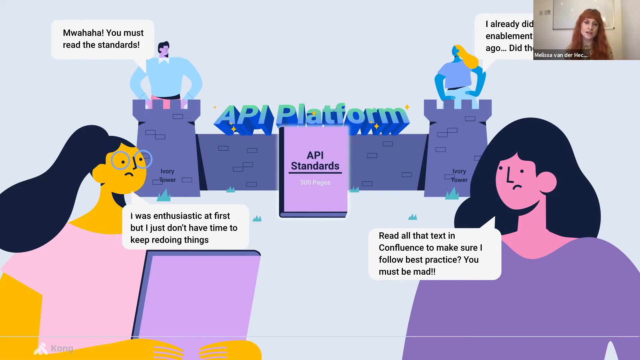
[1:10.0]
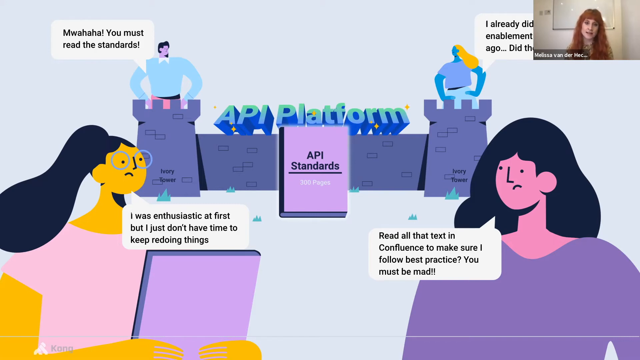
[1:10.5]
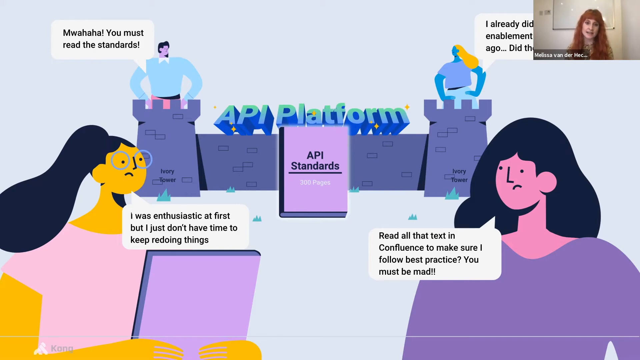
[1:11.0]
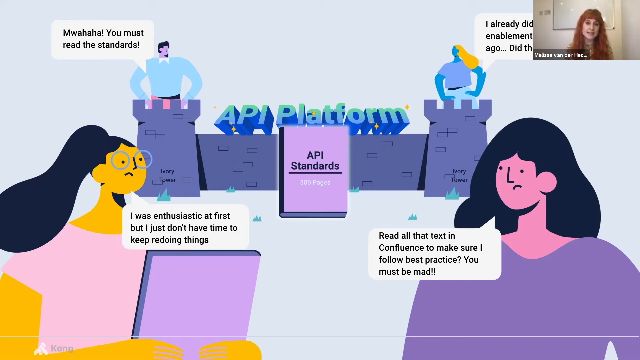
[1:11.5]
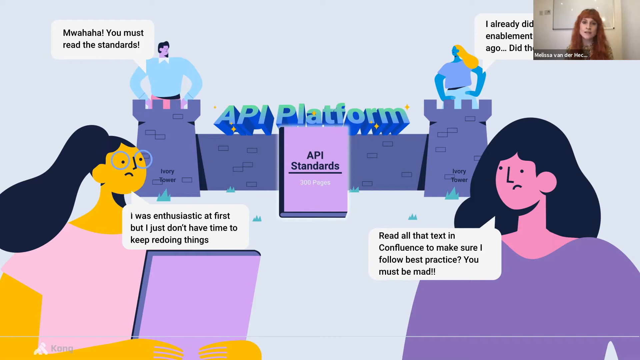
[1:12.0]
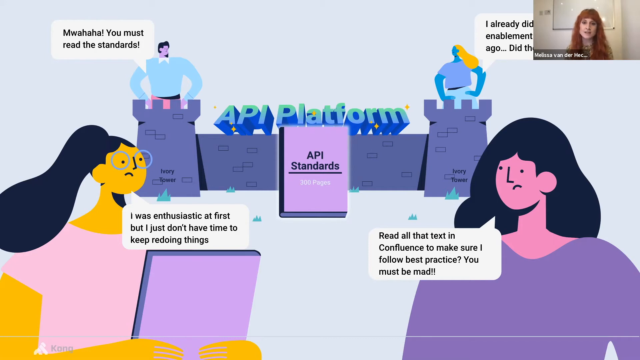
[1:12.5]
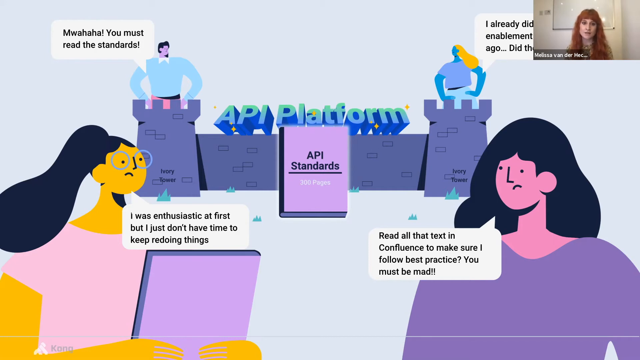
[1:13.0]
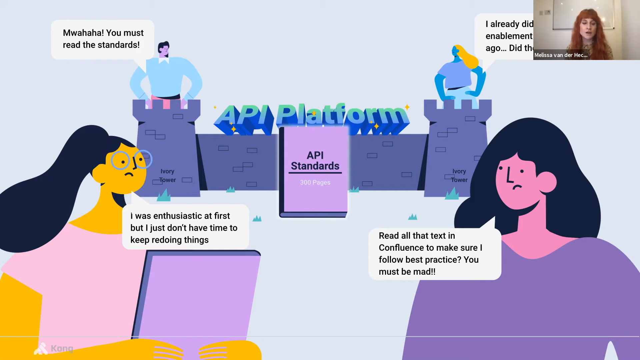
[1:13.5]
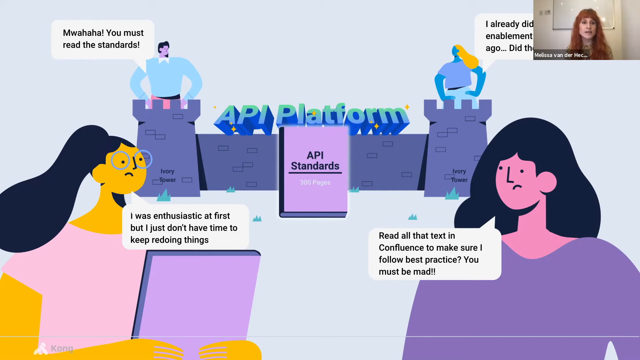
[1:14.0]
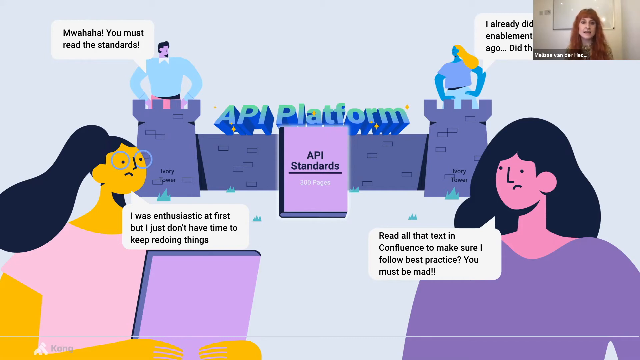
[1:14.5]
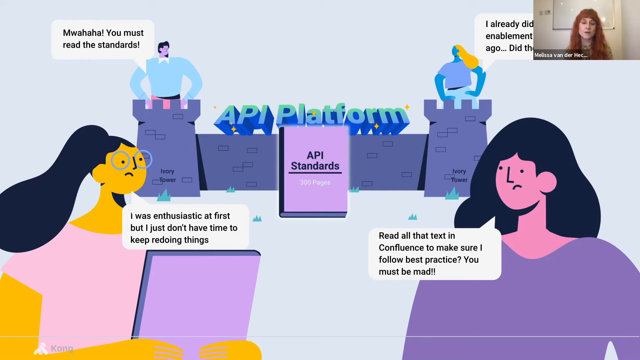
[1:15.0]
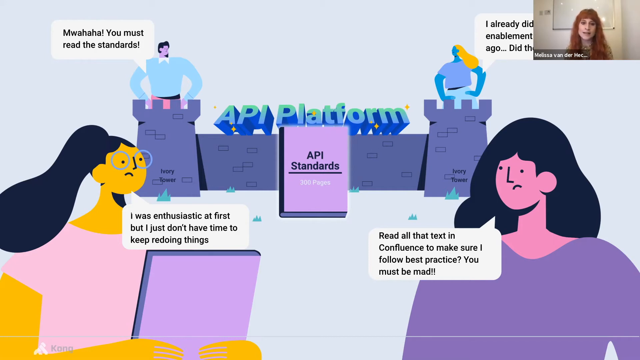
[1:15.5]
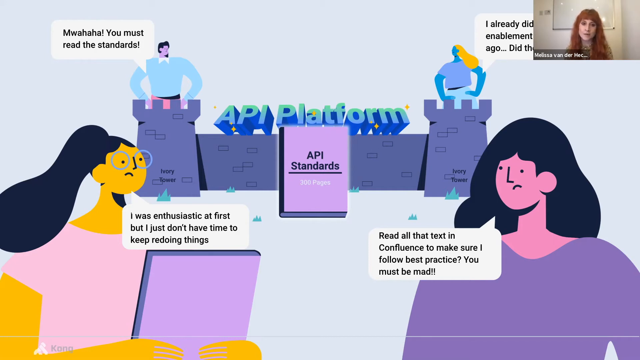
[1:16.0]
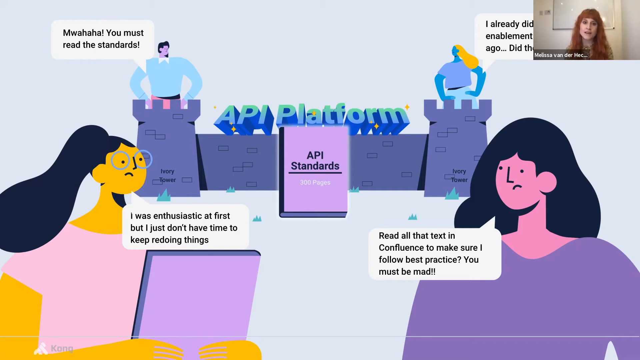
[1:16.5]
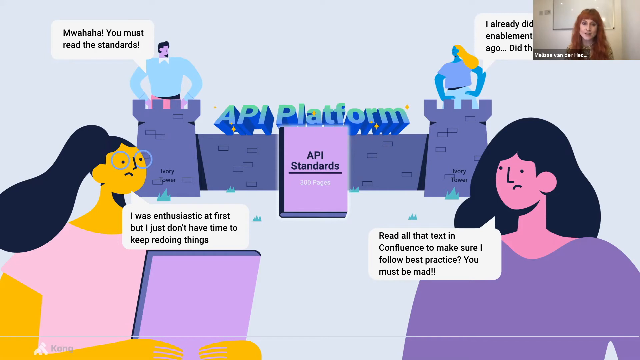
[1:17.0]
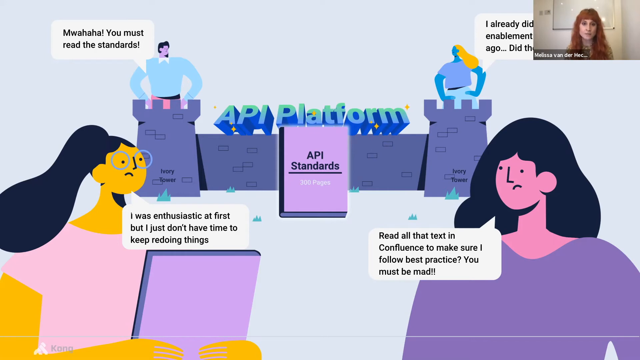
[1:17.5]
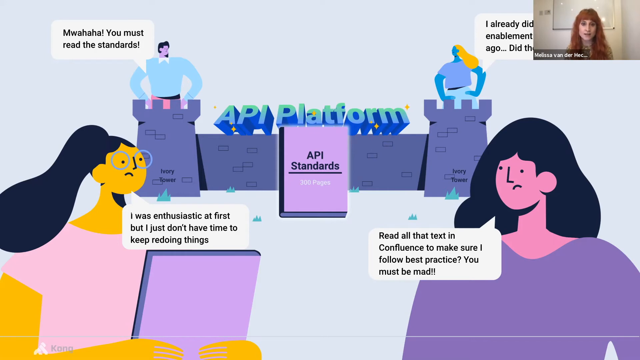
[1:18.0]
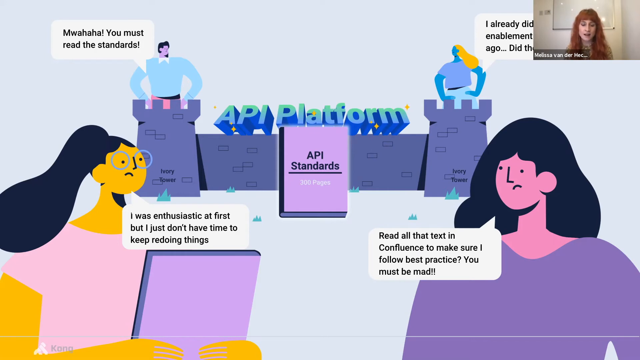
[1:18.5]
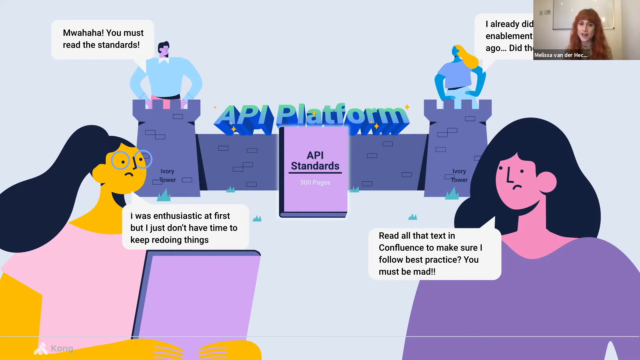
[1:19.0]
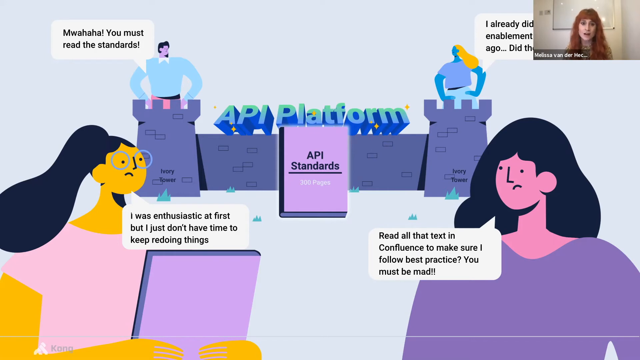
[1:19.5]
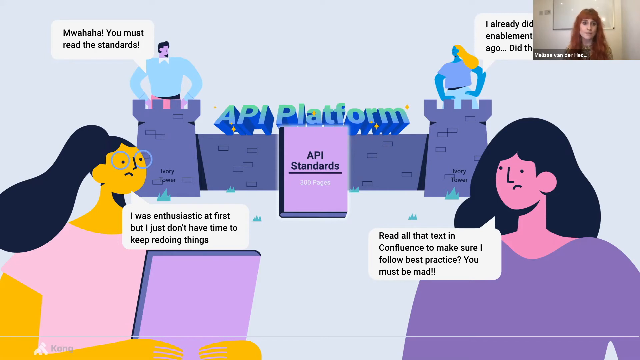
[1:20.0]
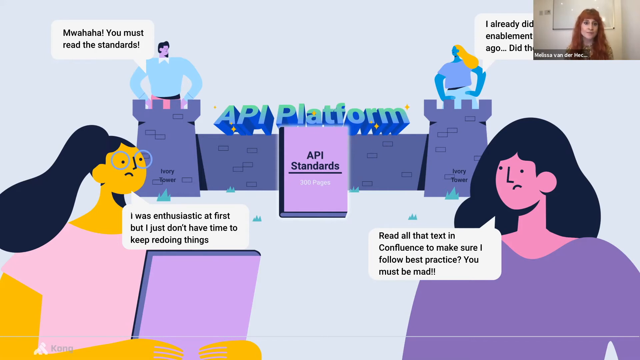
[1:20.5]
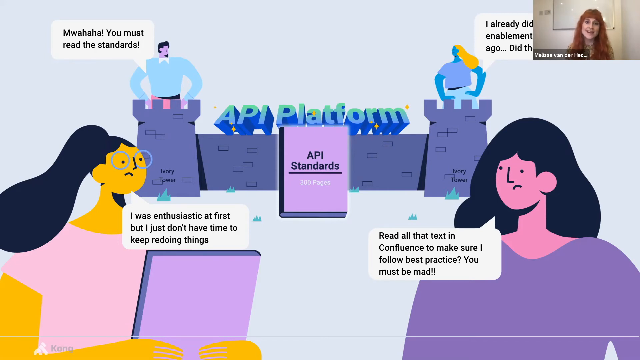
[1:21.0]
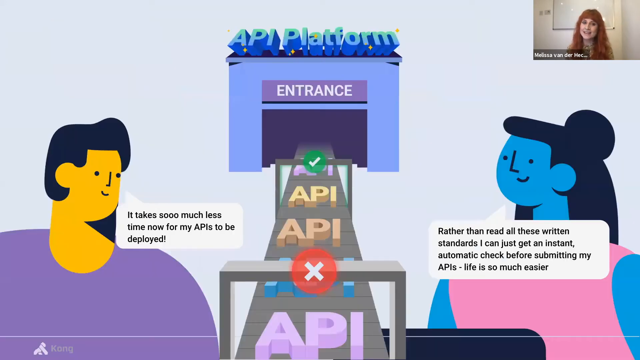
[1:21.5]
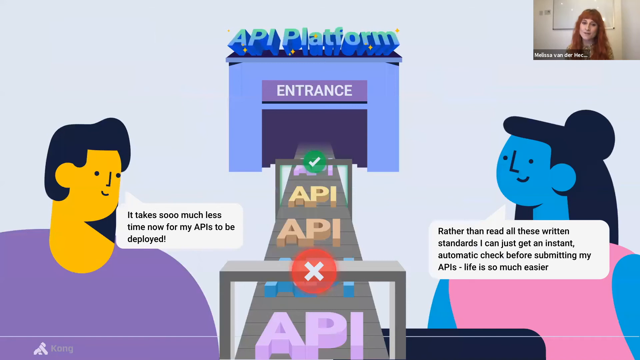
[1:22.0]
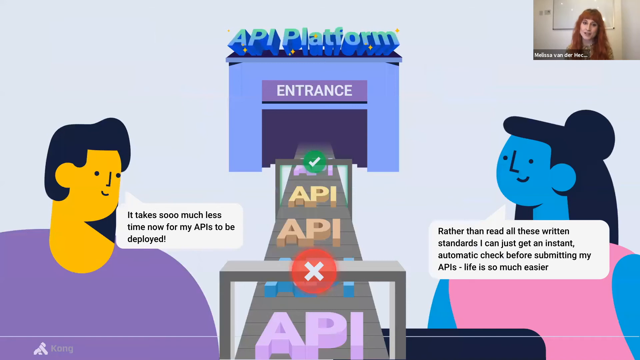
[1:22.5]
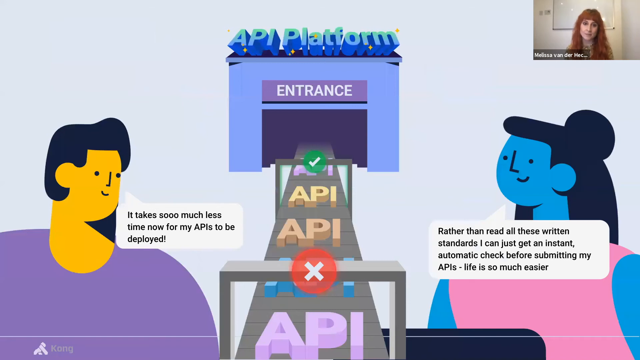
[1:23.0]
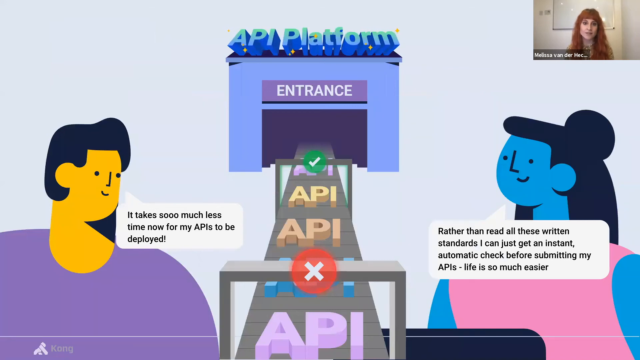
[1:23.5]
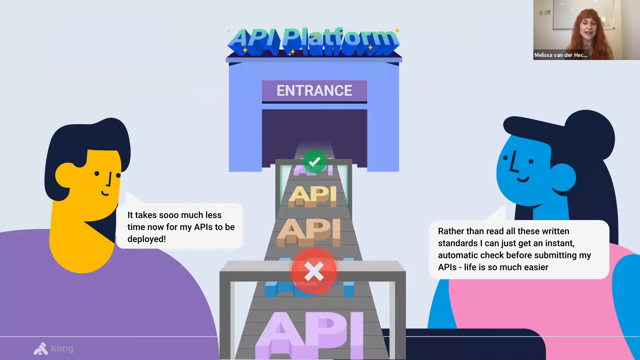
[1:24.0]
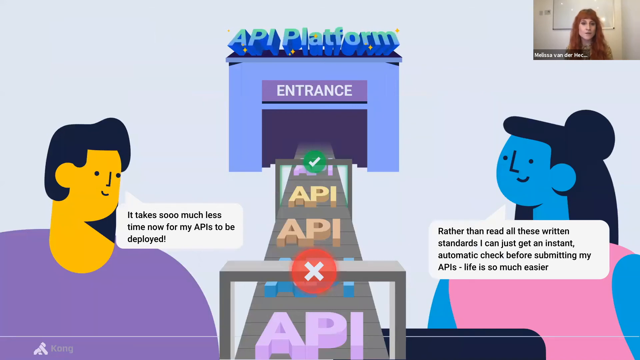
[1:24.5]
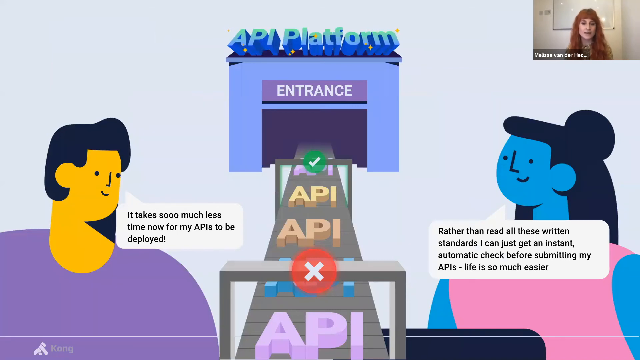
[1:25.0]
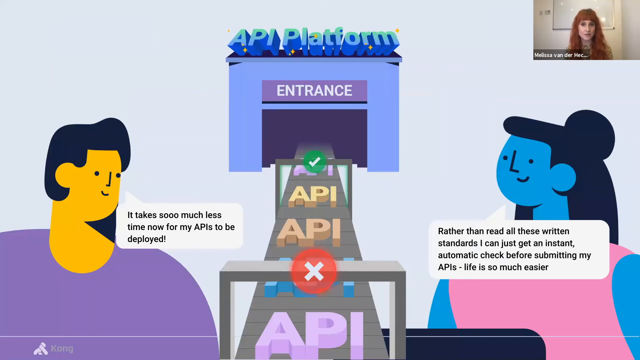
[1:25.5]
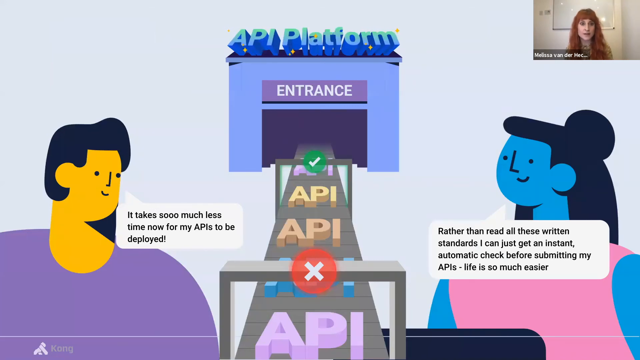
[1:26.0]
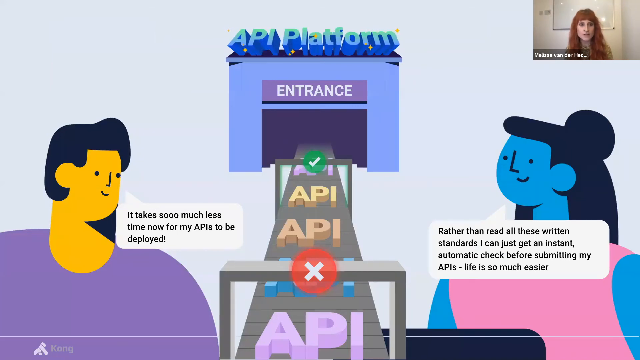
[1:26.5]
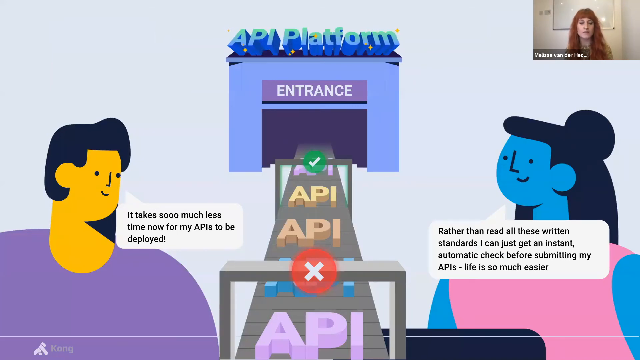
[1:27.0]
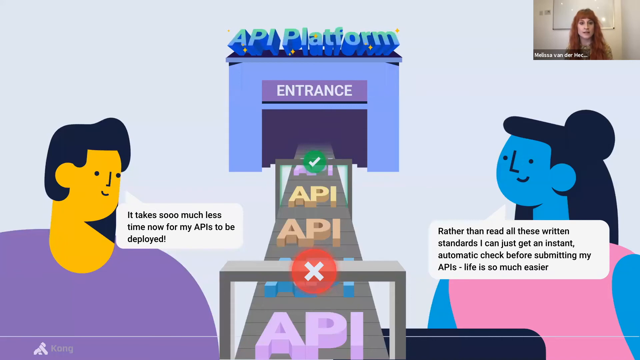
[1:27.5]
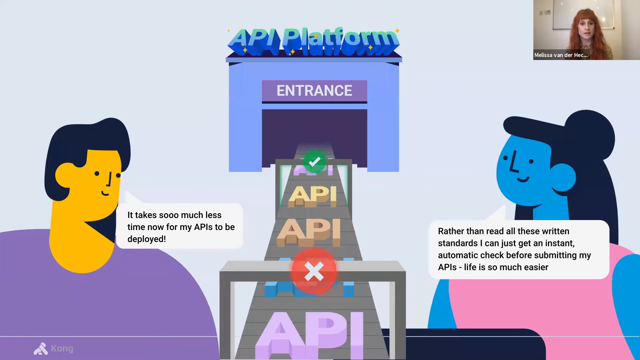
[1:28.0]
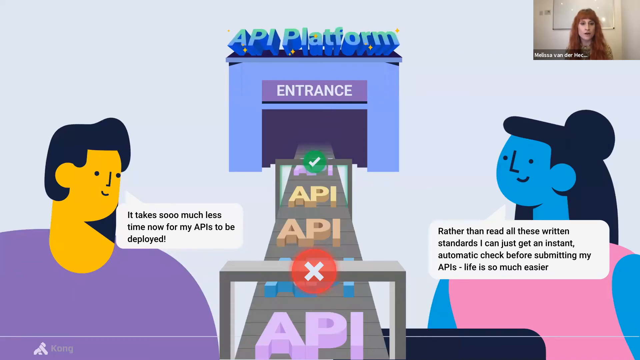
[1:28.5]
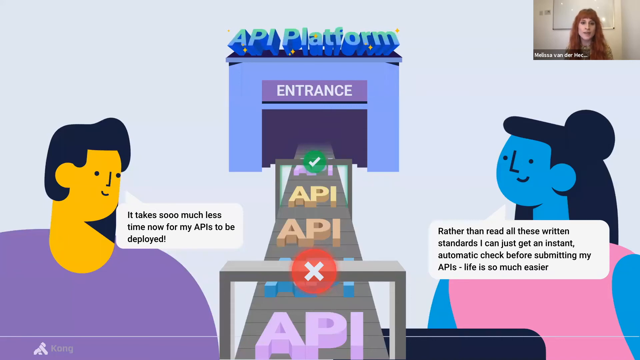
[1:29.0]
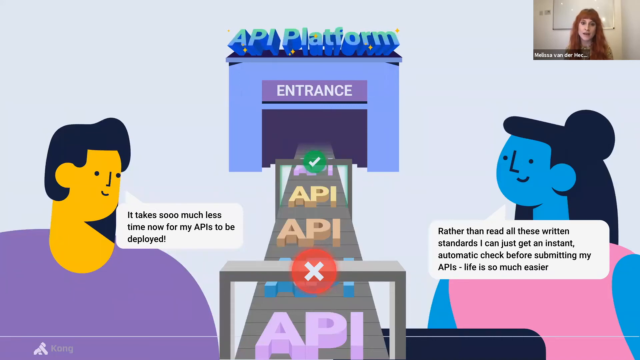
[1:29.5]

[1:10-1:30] The same slide remains while the woman in the corner video continues to talk, now tilting her head slightly to the right as she speaks. After a couple of seconds, the presentation switches to another slide that looks like it is formatted kind of like a factory assembly line in vector art. The perspective is as if standing at the end of the assembly line, watching things move away toward the entrance of a building labeled "Entrance" in white text. Above the building is the text "API platform" in a 3D effect. On either side of the assembly line are two vector figures, each with a speech bubble. On the left, a man says "it takes so much less time now for my APIs to be deployed." On the right, a woman says "rather than read all these written standards, I can just get an instant automatic check before submitting my APIs. Life is so much easier." The slide stays for a few seconds while the woman in the top right-hand corner continues talking.